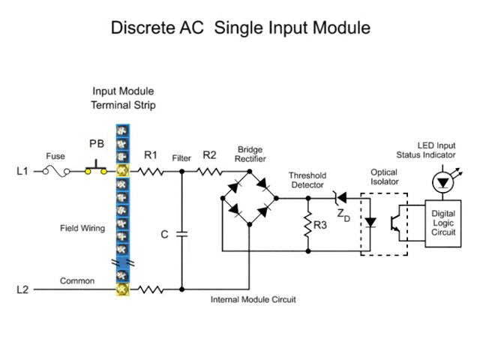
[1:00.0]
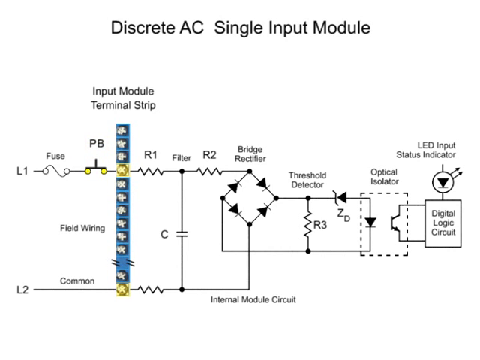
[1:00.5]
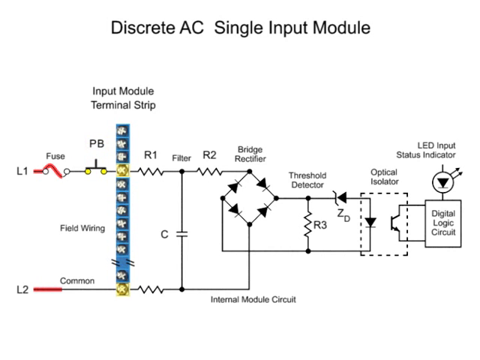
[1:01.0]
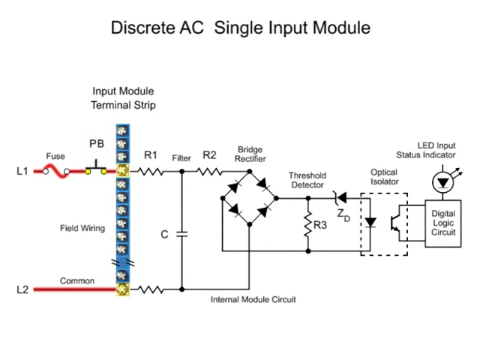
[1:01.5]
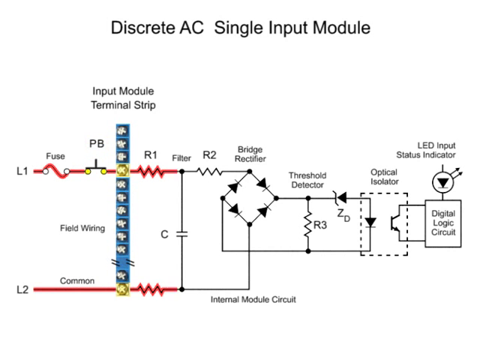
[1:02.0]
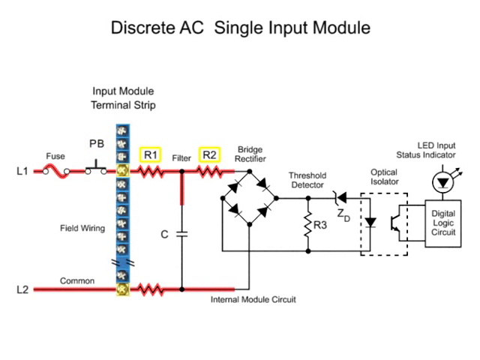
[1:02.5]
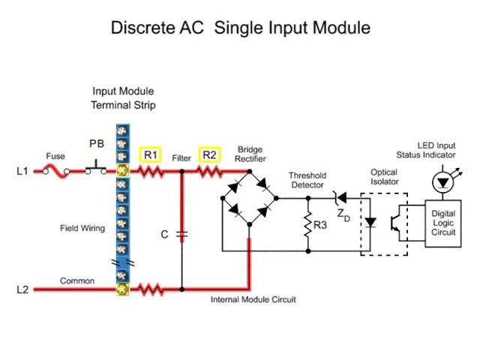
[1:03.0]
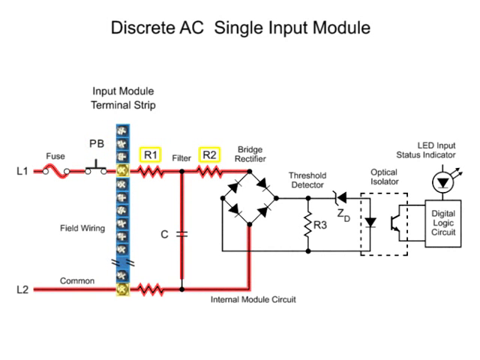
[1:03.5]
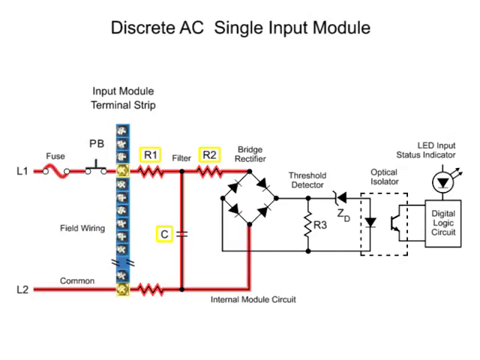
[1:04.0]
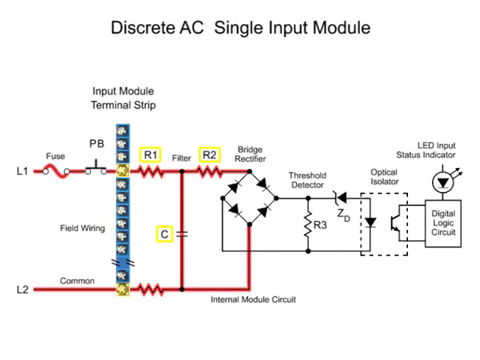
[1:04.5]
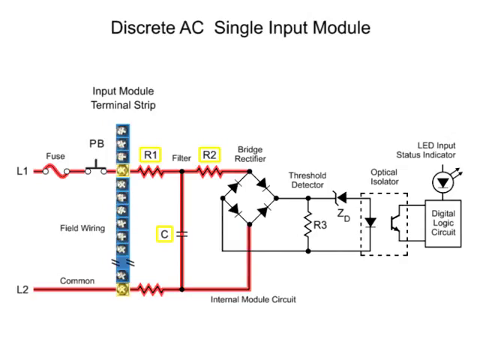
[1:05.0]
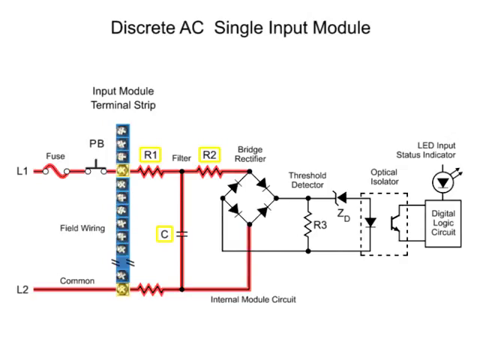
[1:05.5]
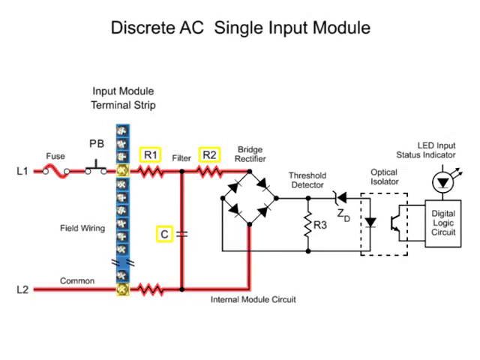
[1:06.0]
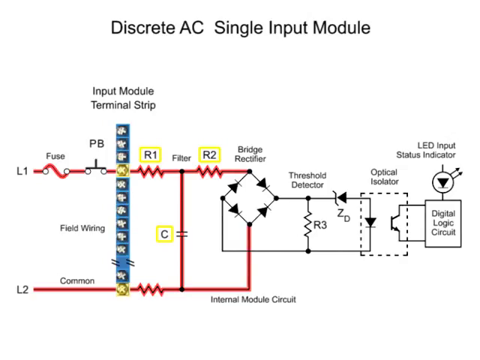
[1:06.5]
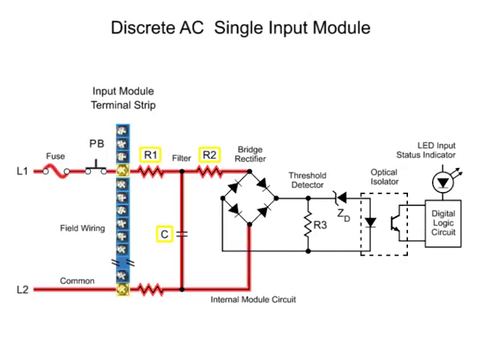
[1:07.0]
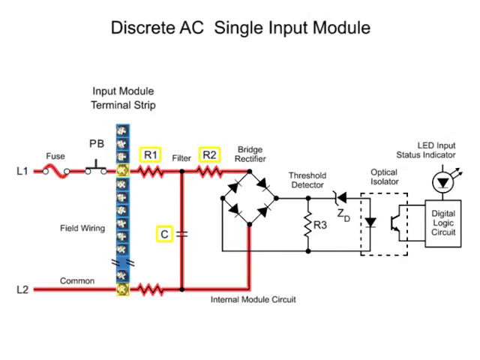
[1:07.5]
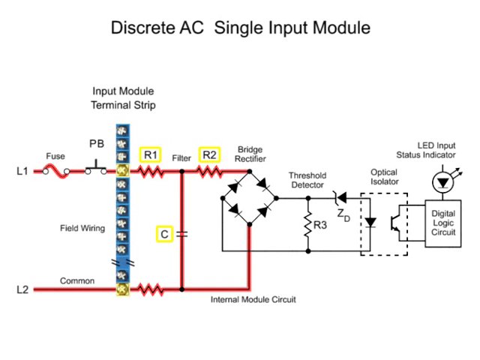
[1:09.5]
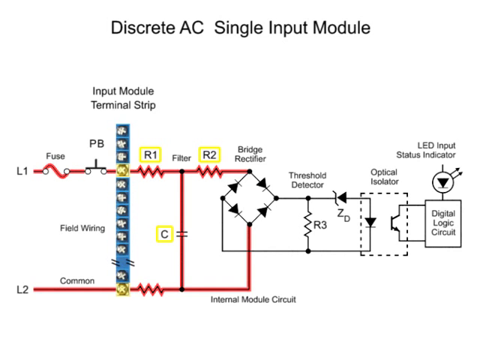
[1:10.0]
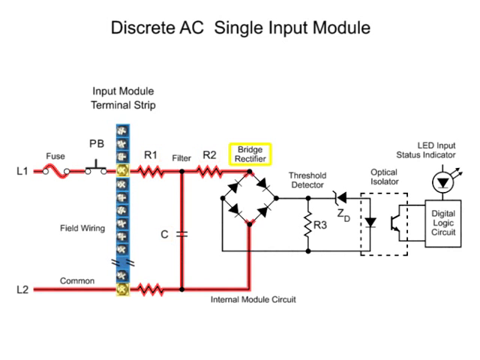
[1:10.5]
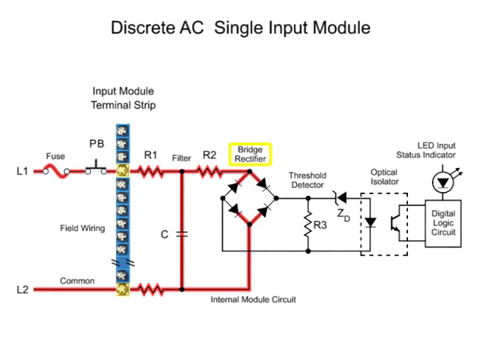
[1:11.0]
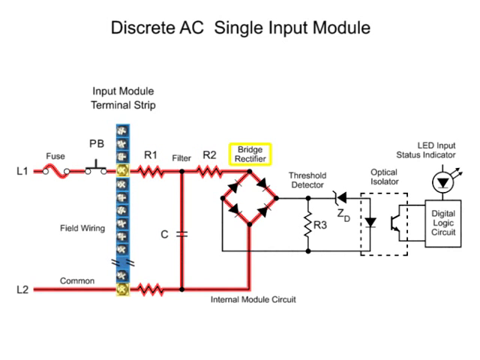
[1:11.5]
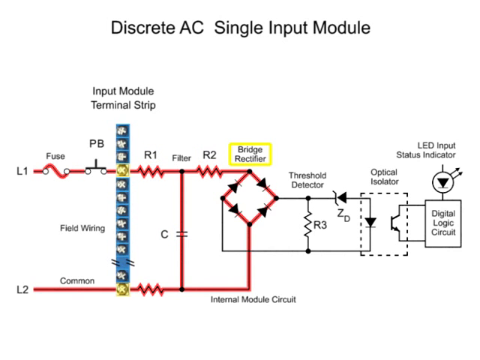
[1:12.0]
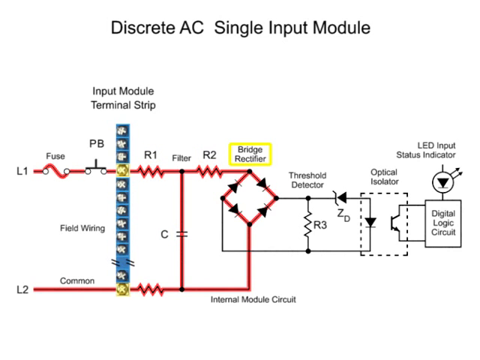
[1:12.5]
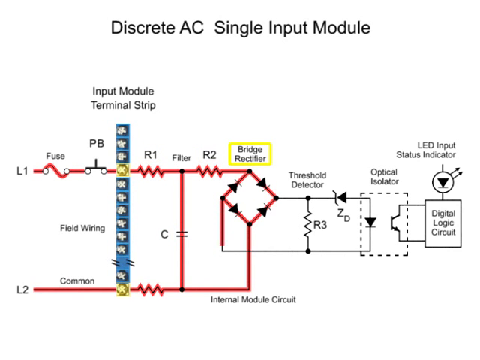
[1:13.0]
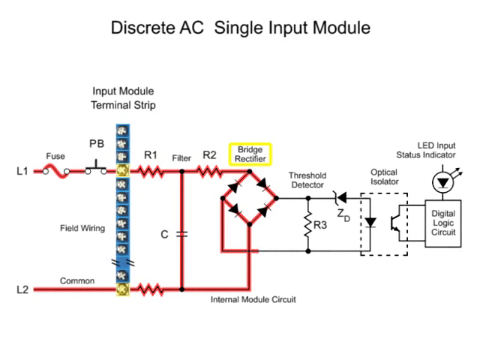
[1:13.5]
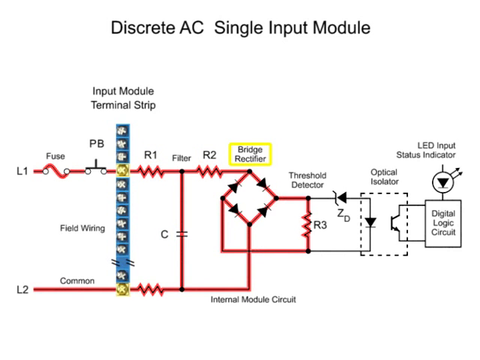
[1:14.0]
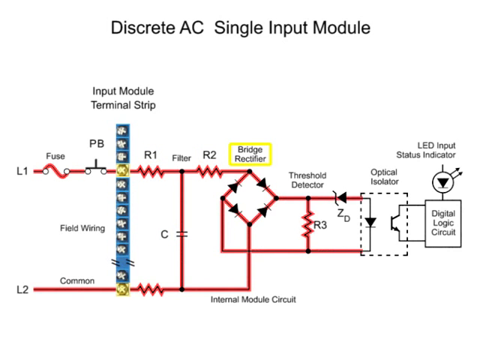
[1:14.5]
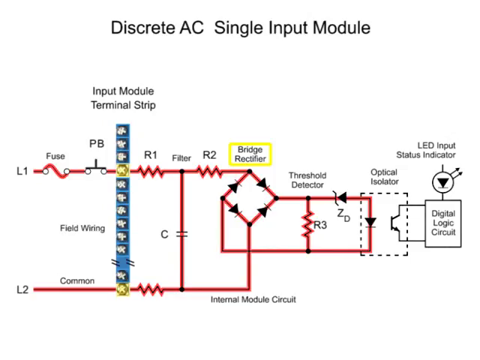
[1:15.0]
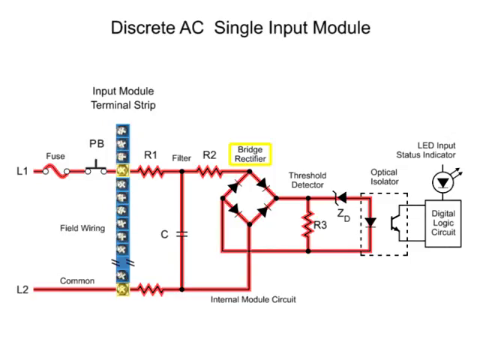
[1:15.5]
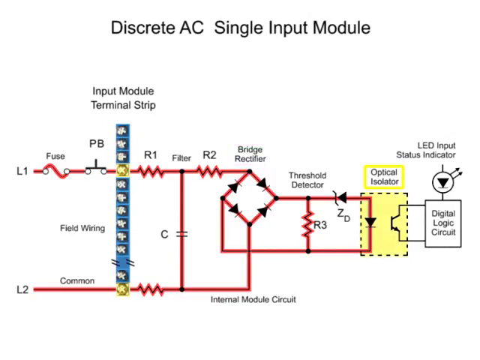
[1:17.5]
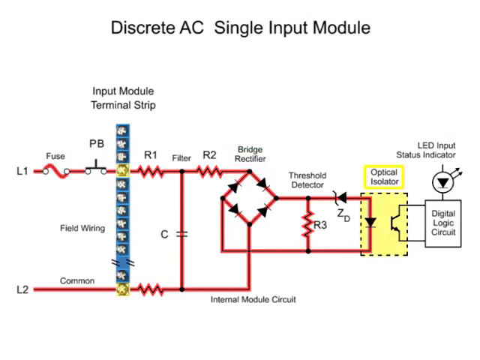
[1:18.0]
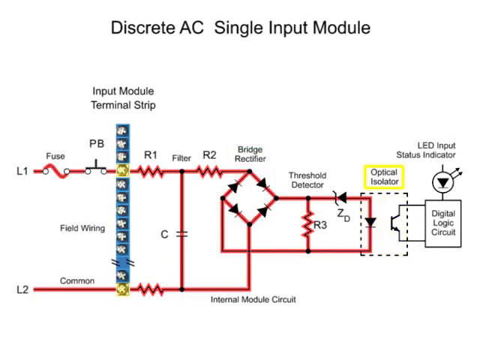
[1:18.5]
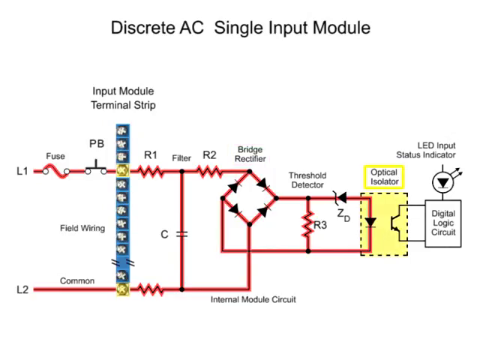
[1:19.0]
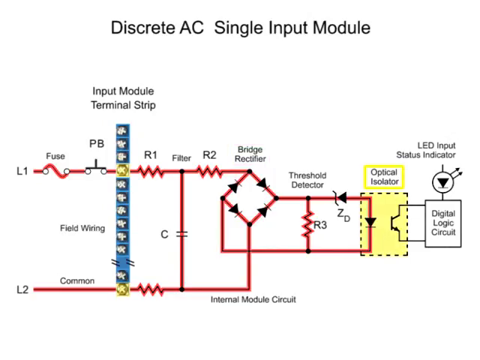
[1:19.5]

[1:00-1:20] The diagram now shows how current flows through the input module terminal strip, tracing all the pathways: from the input on the input module terminal strip through resistor 1 and resistor 2, then through the bridge rectifier, then through the threshold detector, where there is resistor 3 and an SD. The current flows through the optical isolator into the LED input status indicator and then enters the digital logic circuit. The diagram clearly shows the field wiring with all its details. Below it is the title "internal module circuit", and at the top is the title "discrete AC single input module".